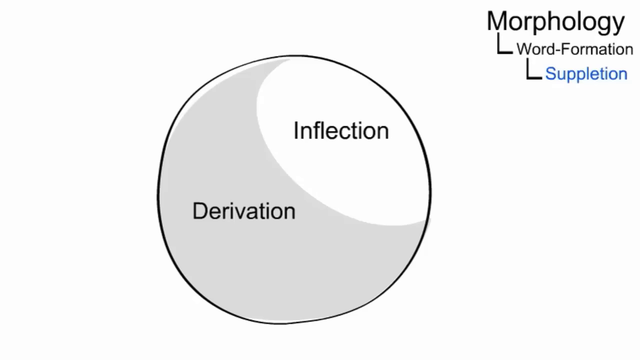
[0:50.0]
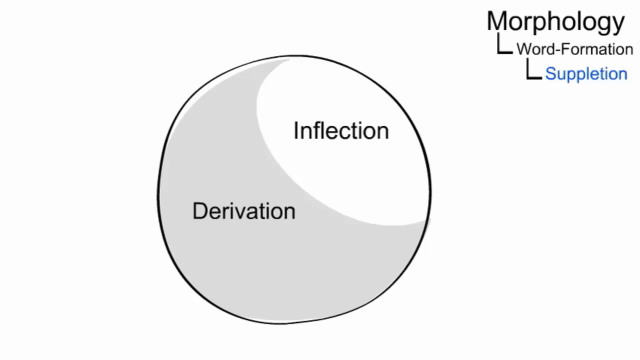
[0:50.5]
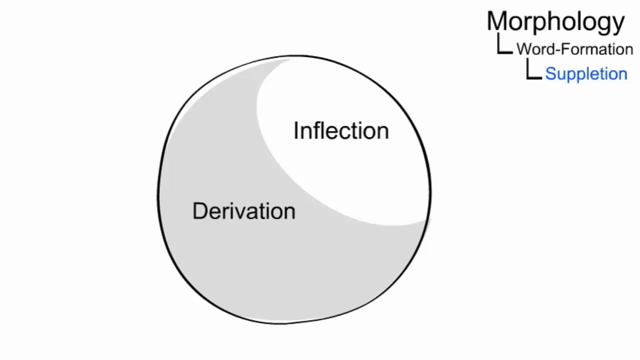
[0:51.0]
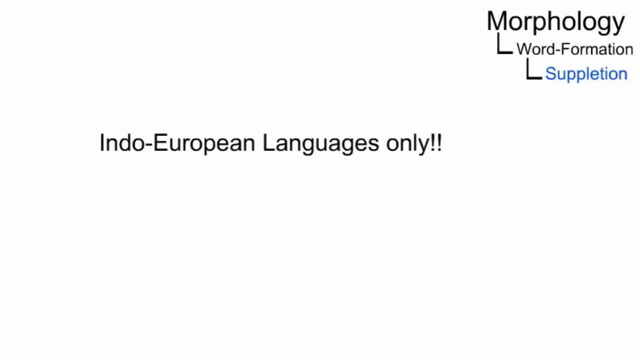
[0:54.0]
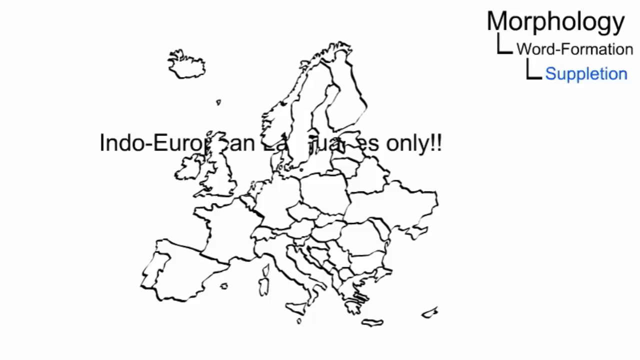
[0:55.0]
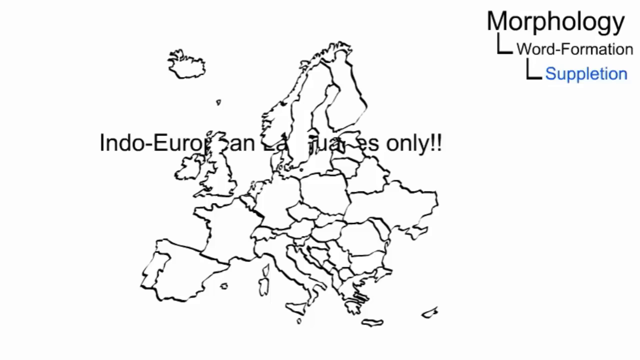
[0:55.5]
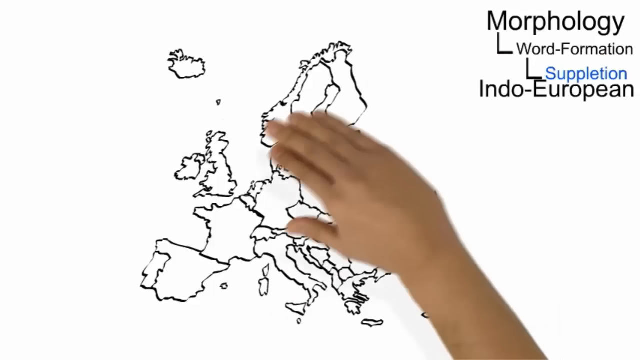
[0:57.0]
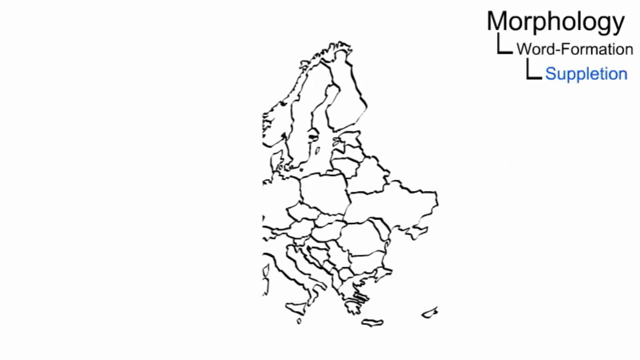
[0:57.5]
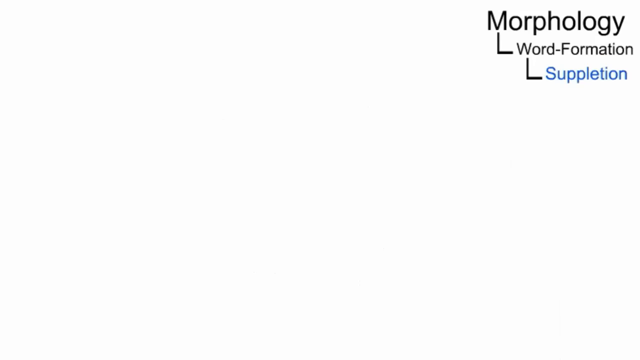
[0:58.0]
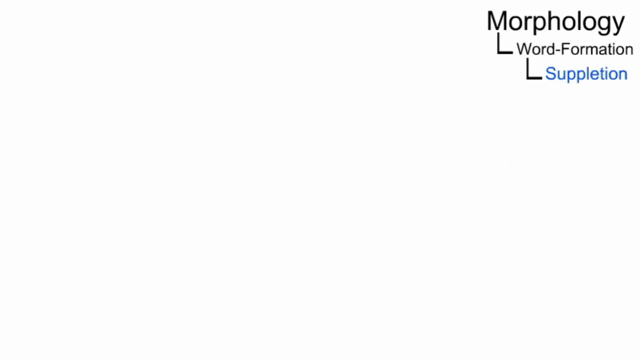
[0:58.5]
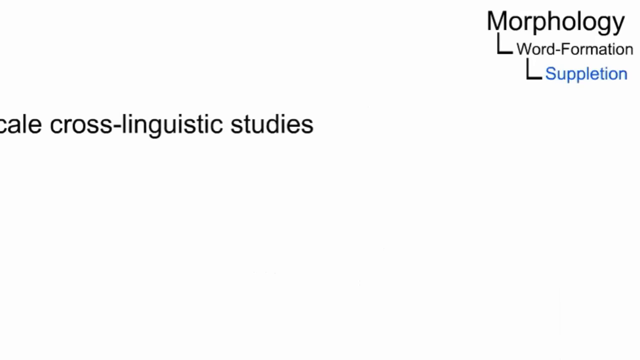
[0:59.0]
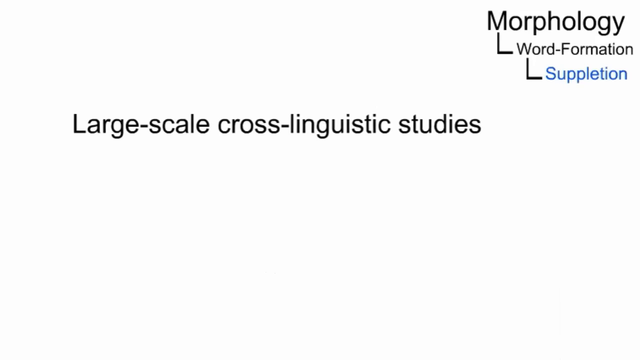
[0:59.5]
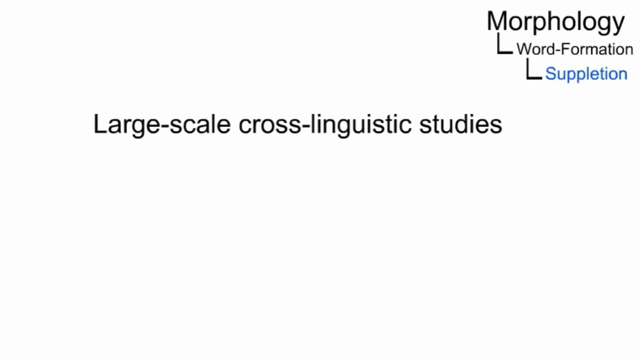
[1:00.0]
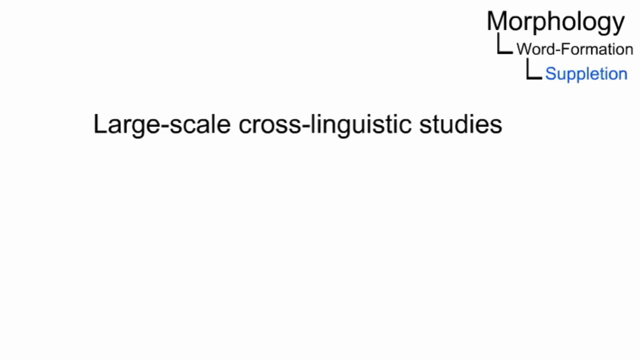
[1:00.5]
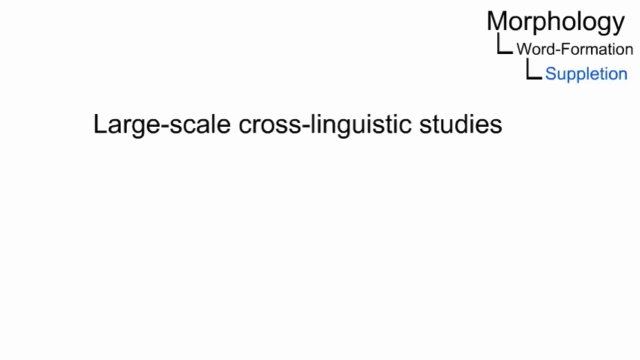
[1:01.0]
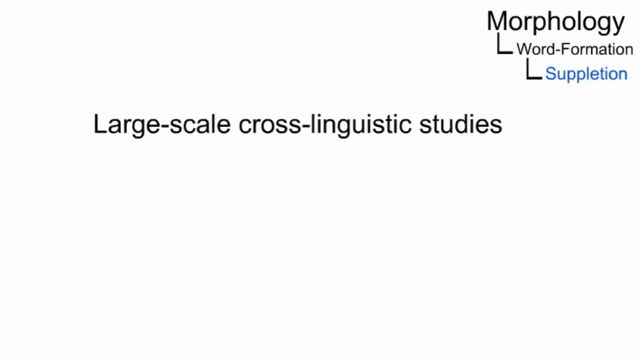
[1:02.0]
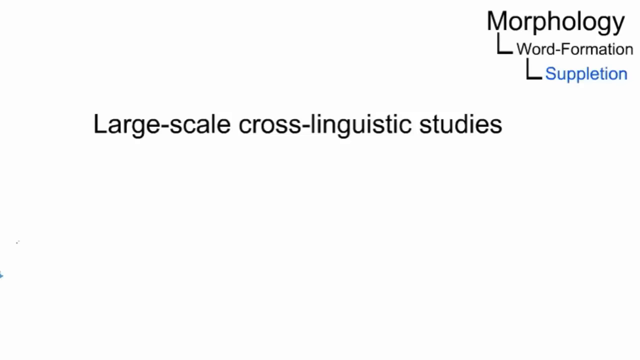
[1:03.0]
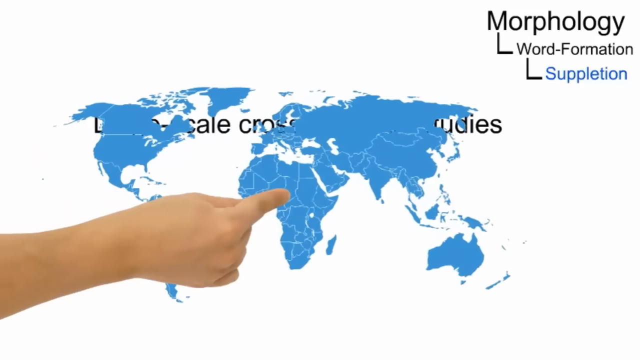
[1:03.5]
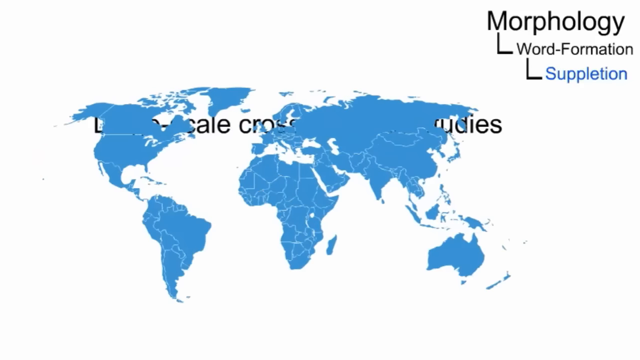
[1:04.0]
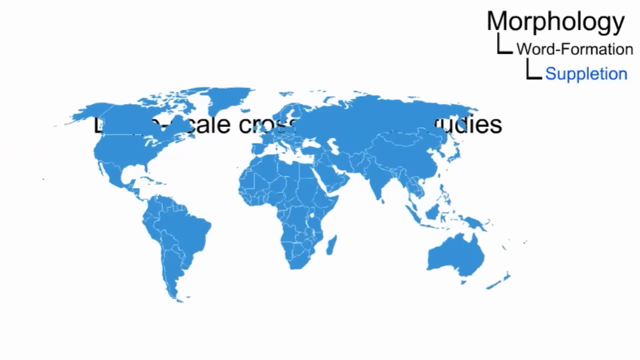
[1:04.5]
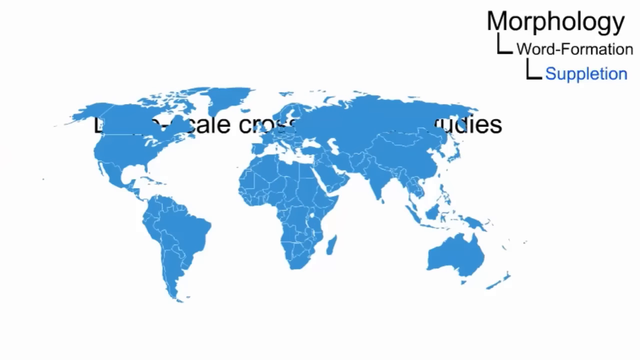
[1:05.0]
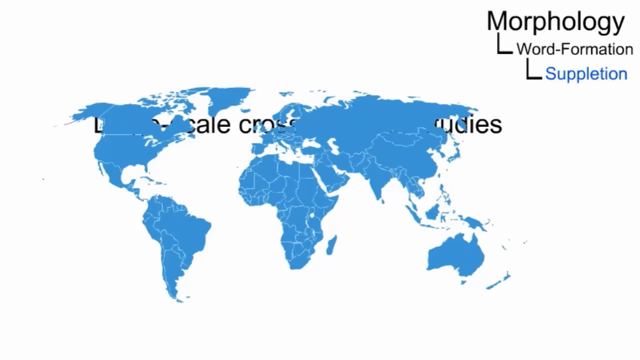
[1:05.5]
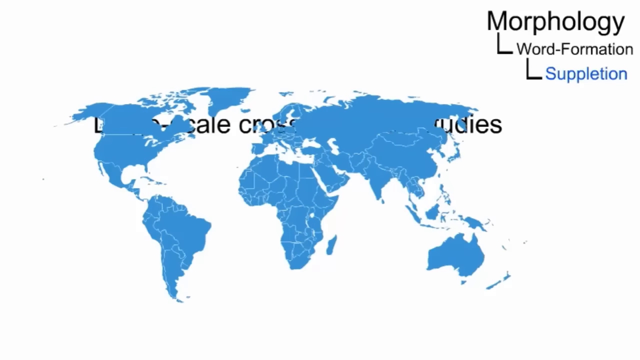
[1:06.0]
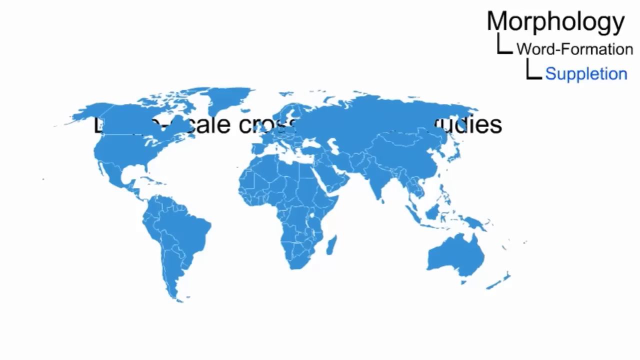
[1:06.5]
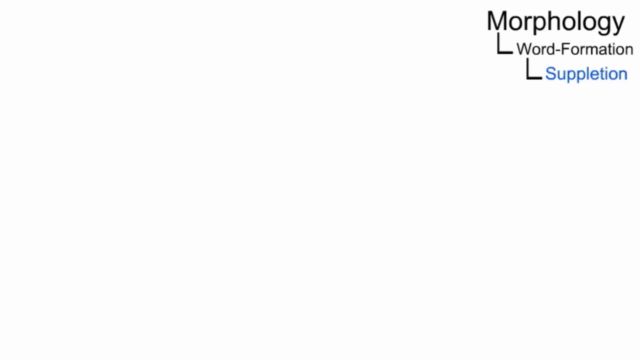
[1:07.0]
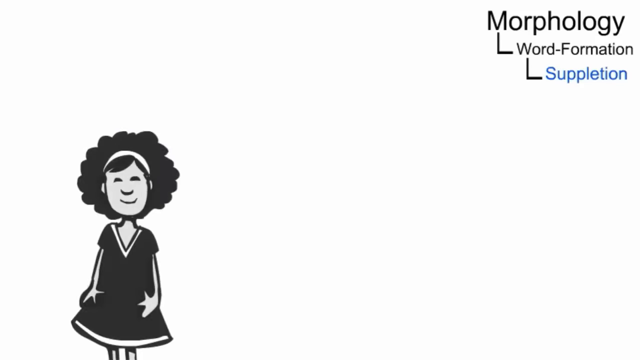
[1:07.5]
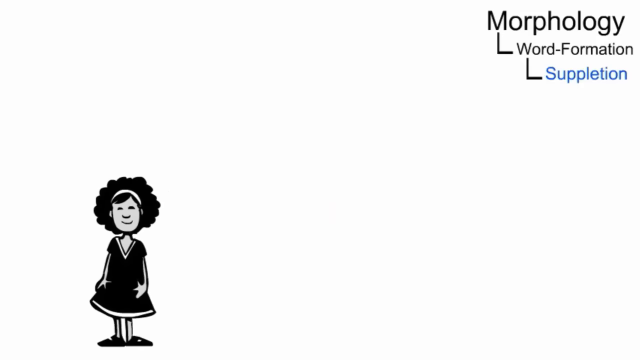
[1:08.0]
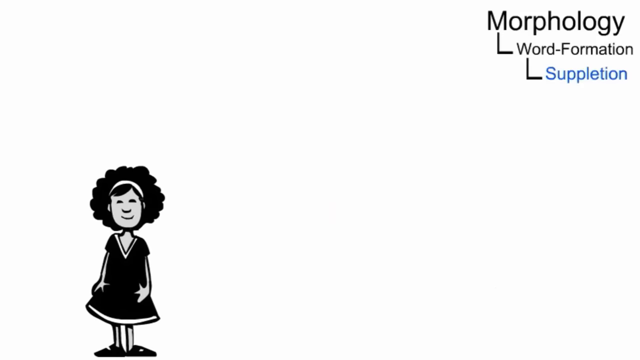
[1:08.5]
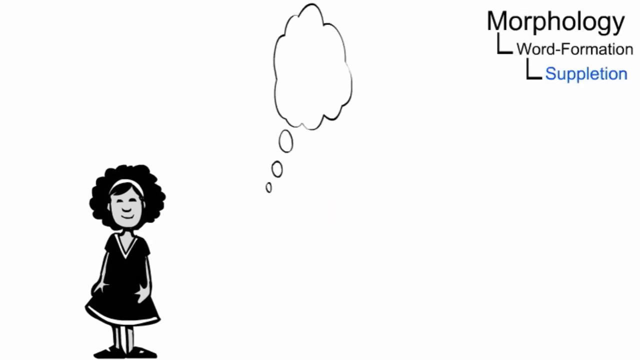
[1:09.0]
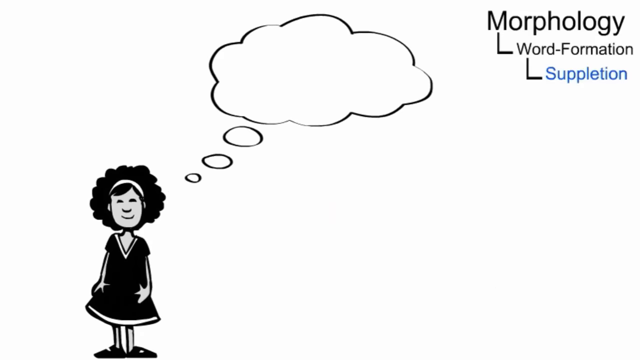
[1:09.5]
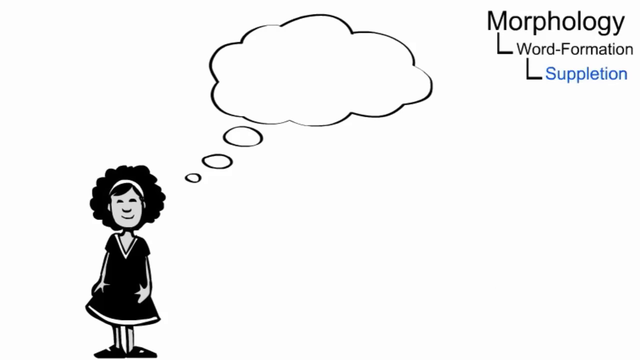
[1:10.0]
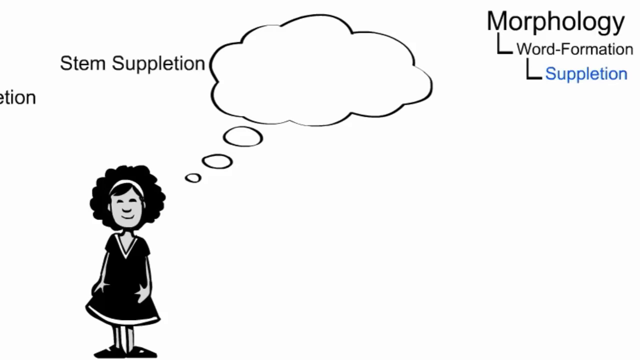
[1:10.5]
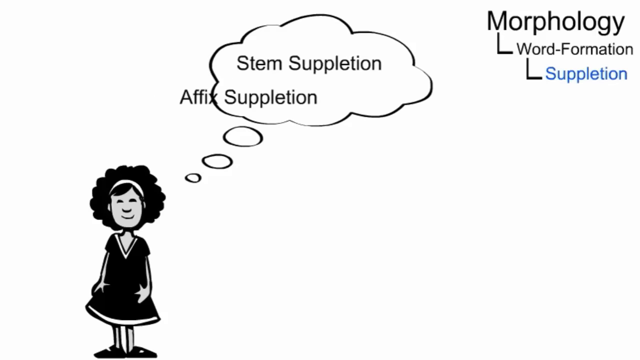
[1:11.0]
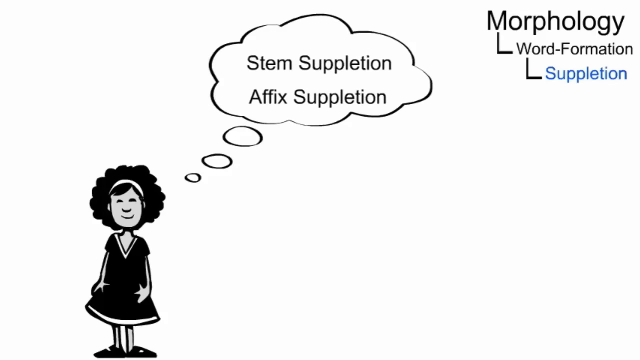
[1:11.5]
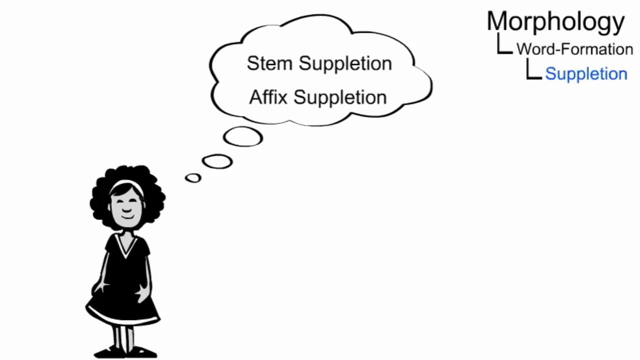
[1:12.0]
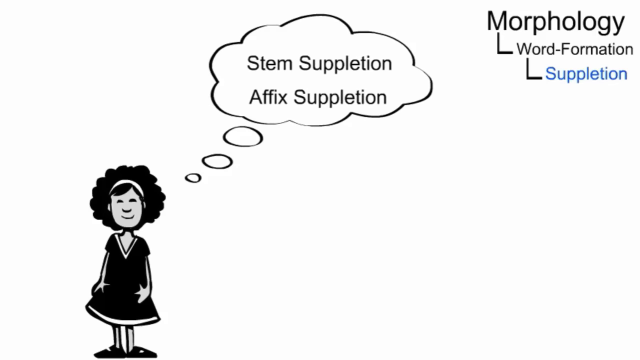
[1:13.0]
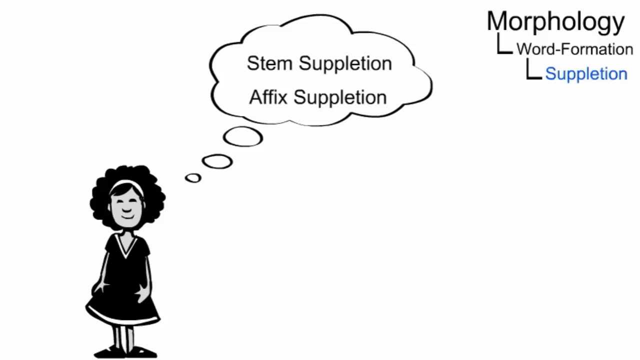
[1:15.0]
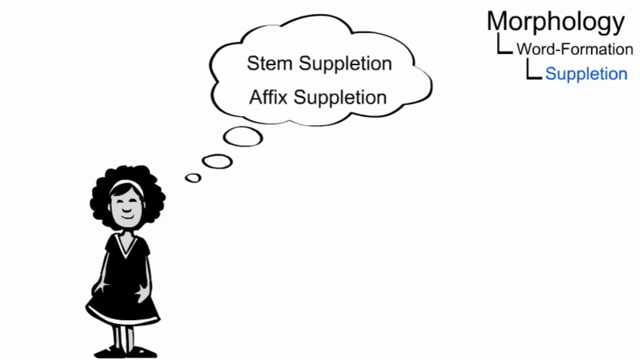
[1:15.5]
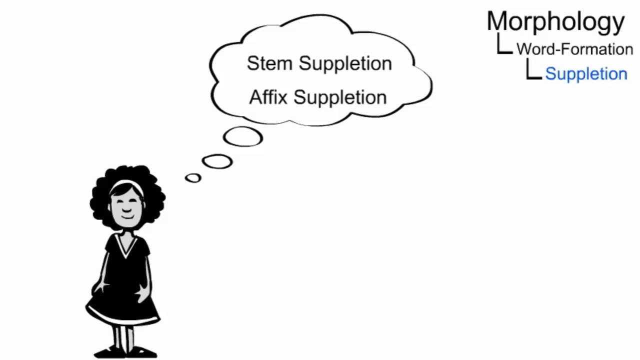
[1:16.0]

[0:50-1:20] At the top of the board is written "the visual linguistic campus," and "Tech" is also written at the top. A person, apparently the lecturer, wears a blue t-shirt and has black hair. At the top of the picture is "linguistic micro-lectures," and a box reads "what is suppletion," with an arrow pointing to the lecturer. At the bottom is written "by Mitra Kemp Marburg University, Germany supervision, Prof, Dr, Jurgen Handke"; the person shown is possibly Dr. Jurgen Handke. Notes are written on the board, and a box has words written inside it. A picture looks like a kid with black hair and a black dress; a cloud containing "stem suppletion, affix suppletion" has an arrow pointing to the girl standing on the boat. Another picture looks like a boy with black hair, with a cloud reading "stem suppletion, affix suppletion." An oval contains words: "derivation" in black and "inflection" on the white. There is also a blue map, and a person is showing a map.